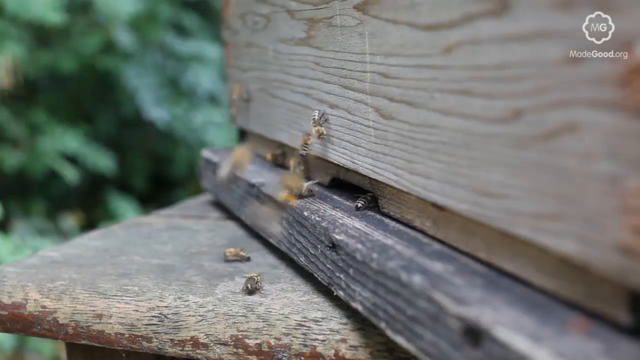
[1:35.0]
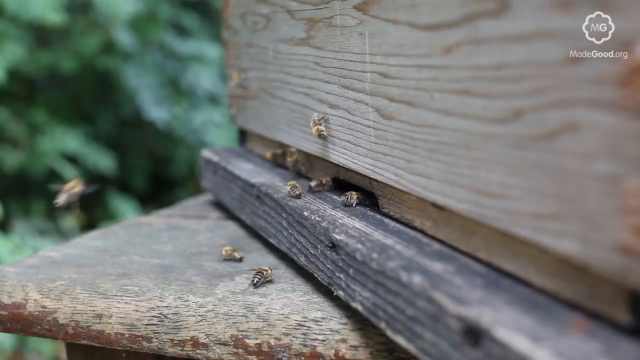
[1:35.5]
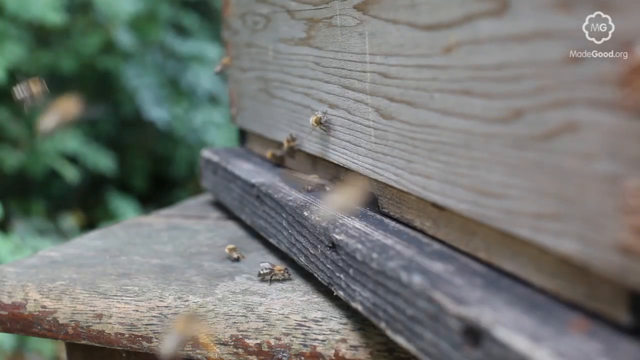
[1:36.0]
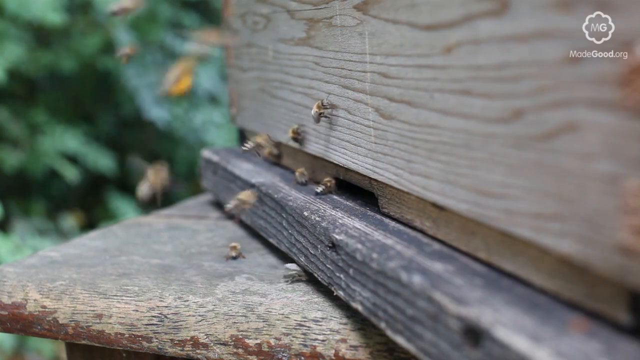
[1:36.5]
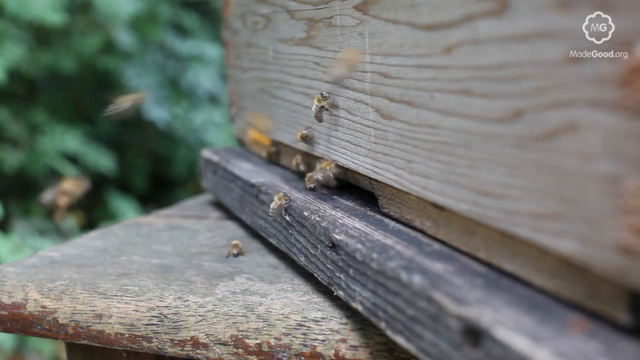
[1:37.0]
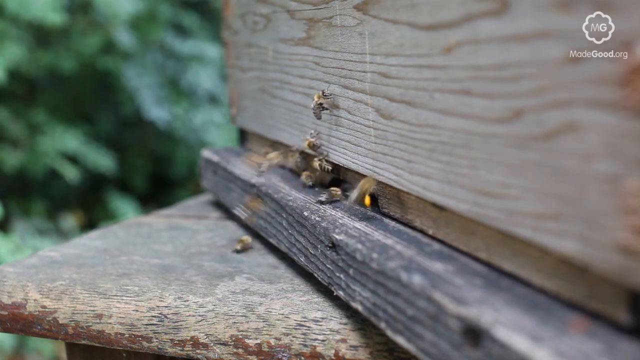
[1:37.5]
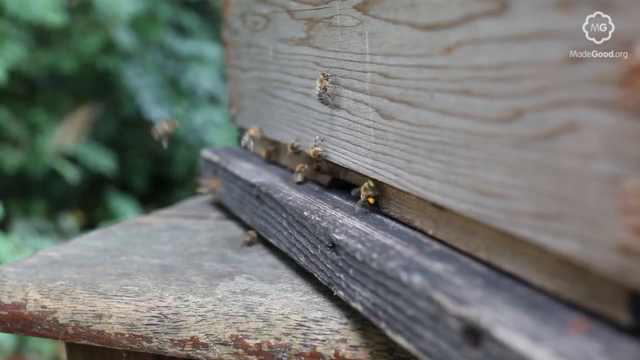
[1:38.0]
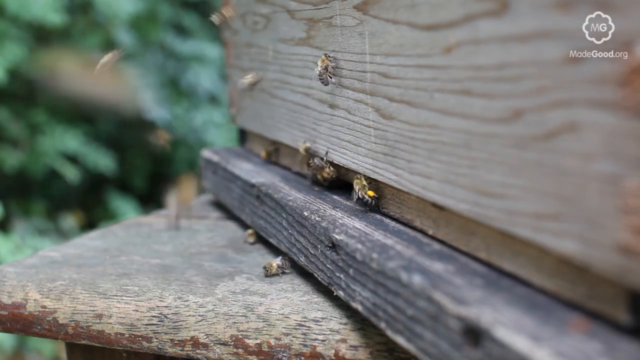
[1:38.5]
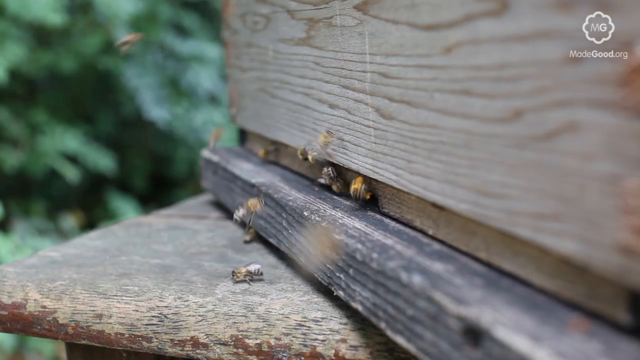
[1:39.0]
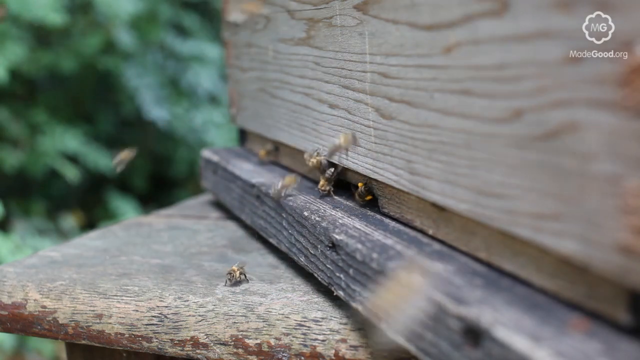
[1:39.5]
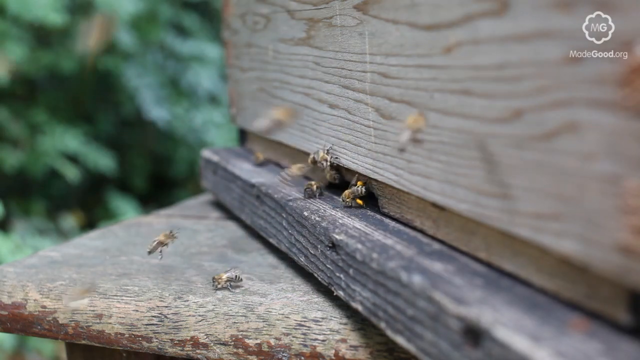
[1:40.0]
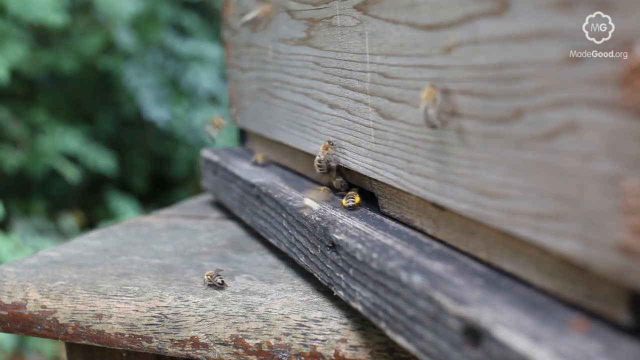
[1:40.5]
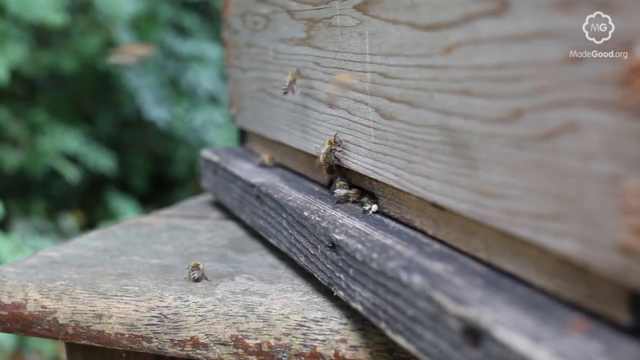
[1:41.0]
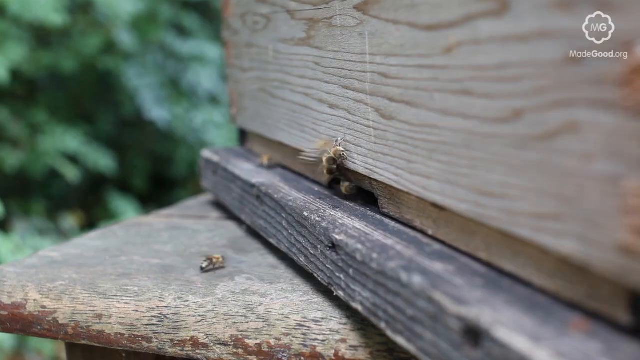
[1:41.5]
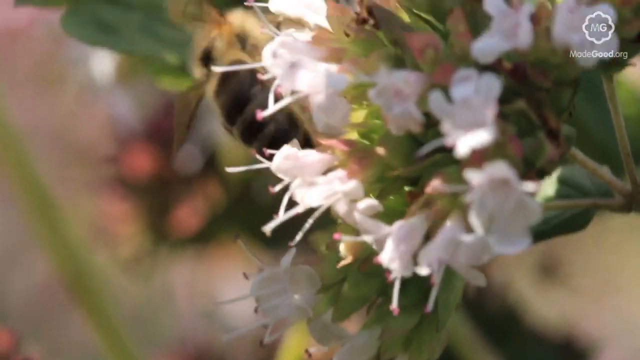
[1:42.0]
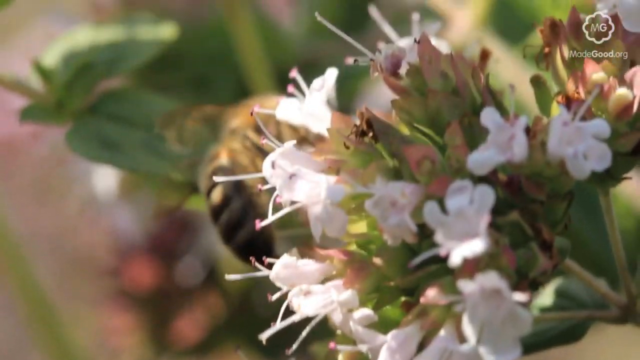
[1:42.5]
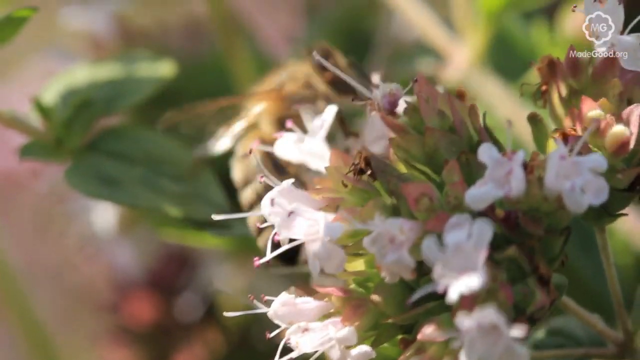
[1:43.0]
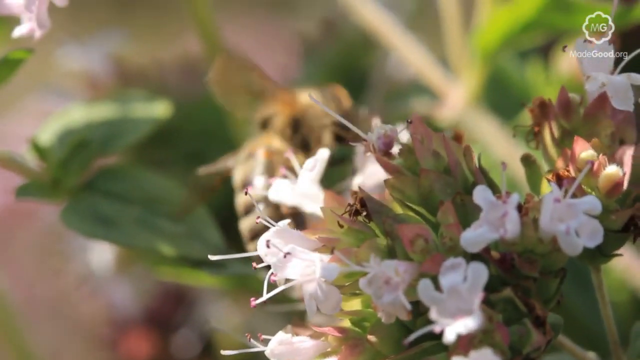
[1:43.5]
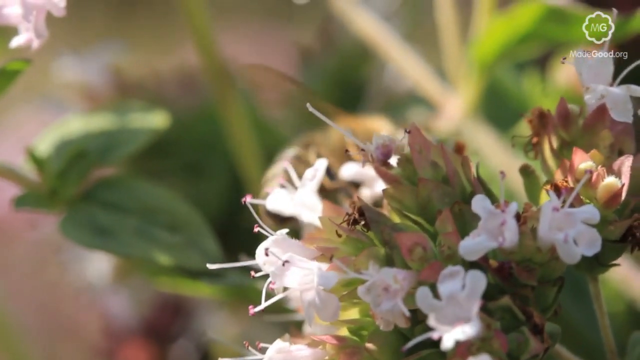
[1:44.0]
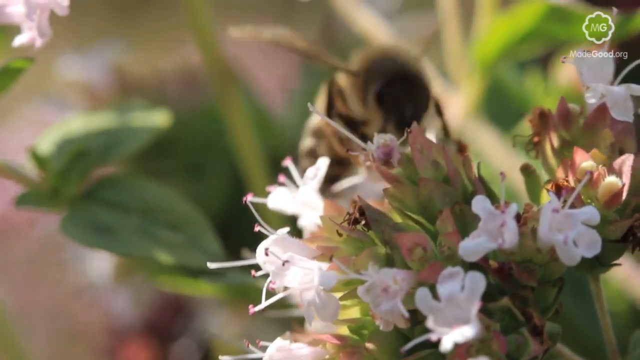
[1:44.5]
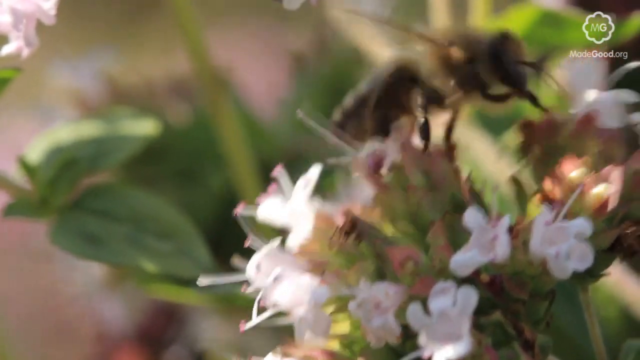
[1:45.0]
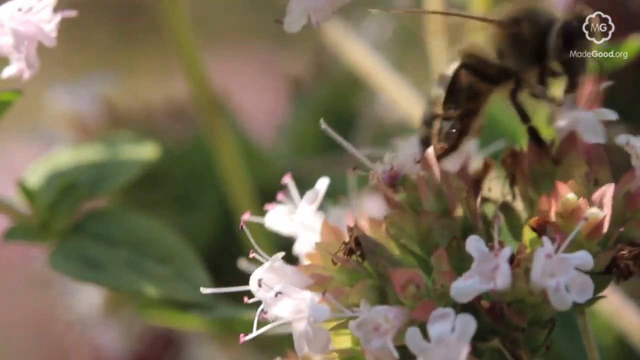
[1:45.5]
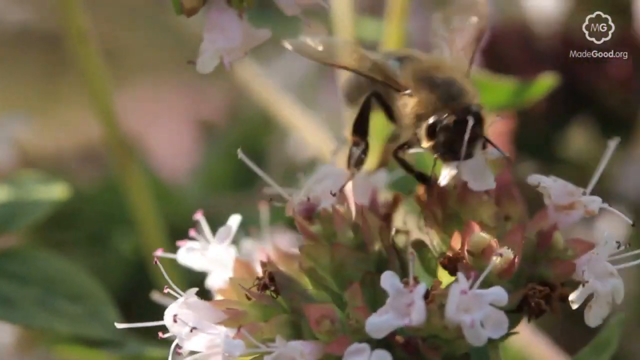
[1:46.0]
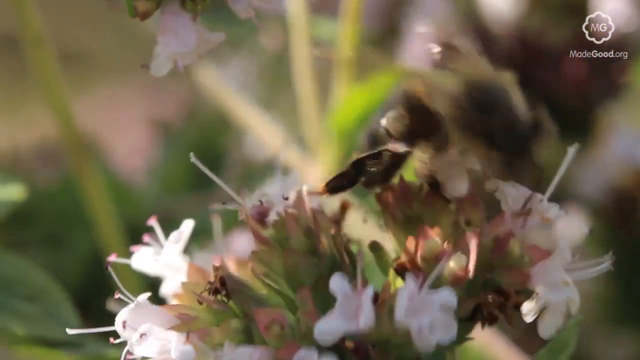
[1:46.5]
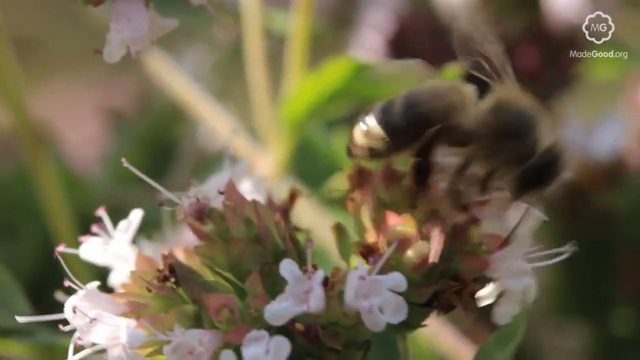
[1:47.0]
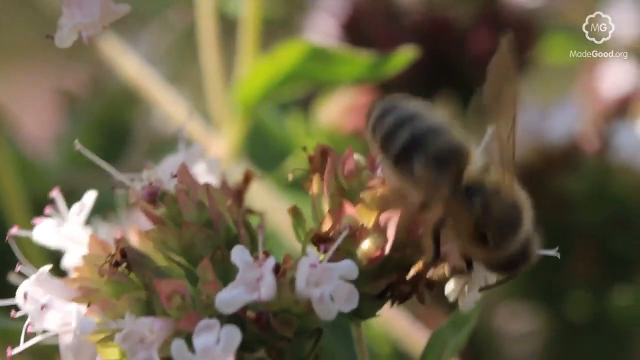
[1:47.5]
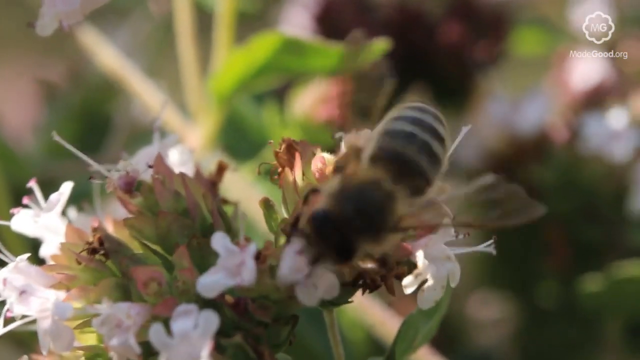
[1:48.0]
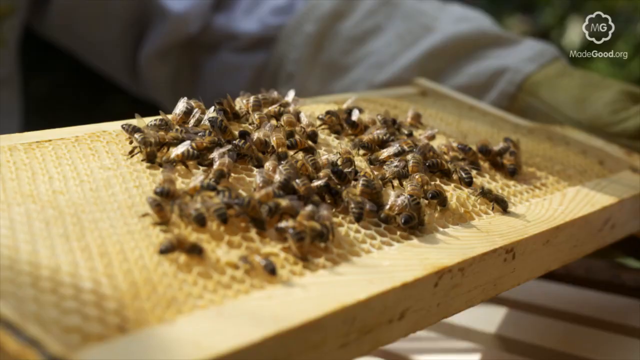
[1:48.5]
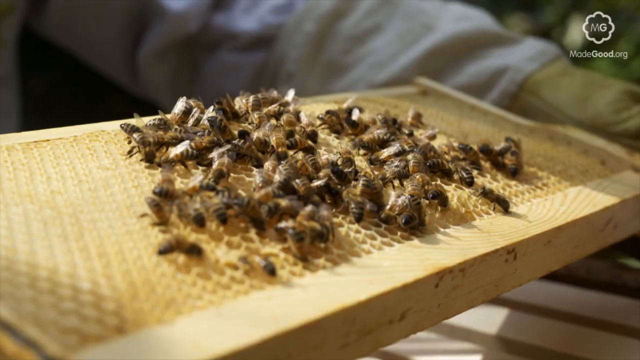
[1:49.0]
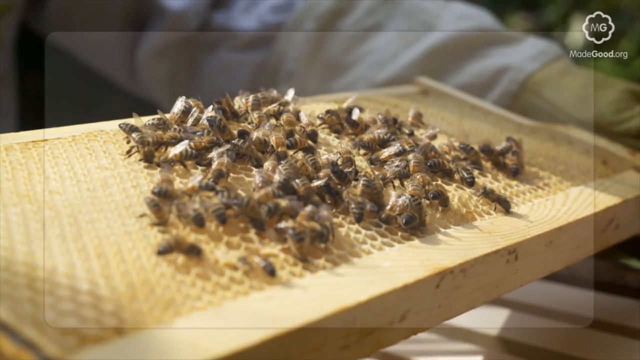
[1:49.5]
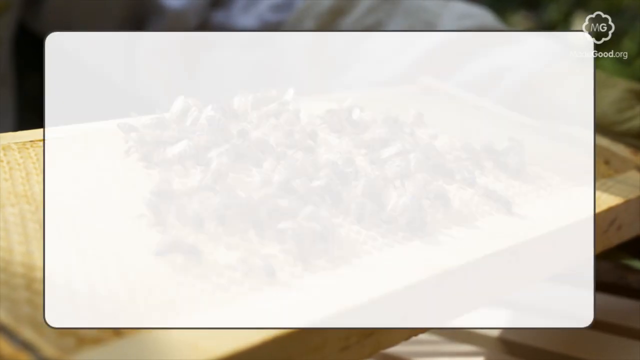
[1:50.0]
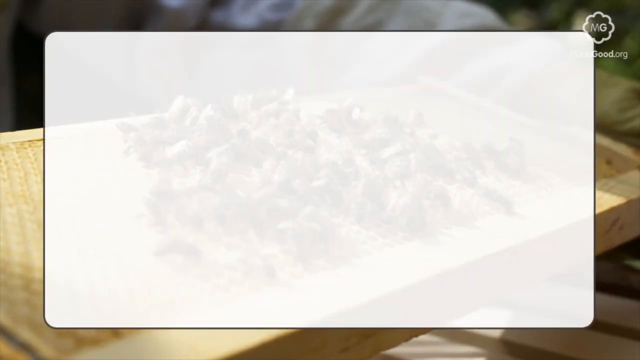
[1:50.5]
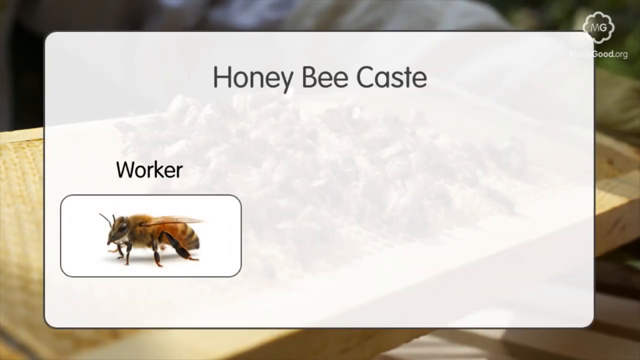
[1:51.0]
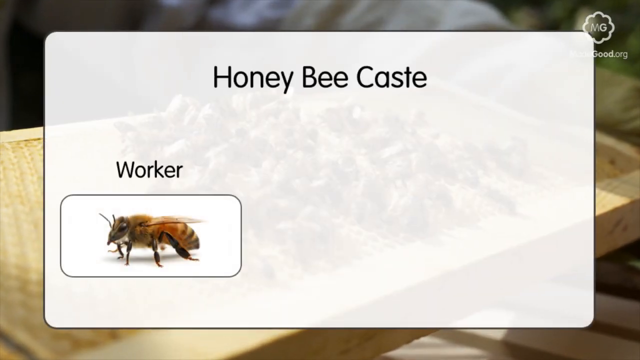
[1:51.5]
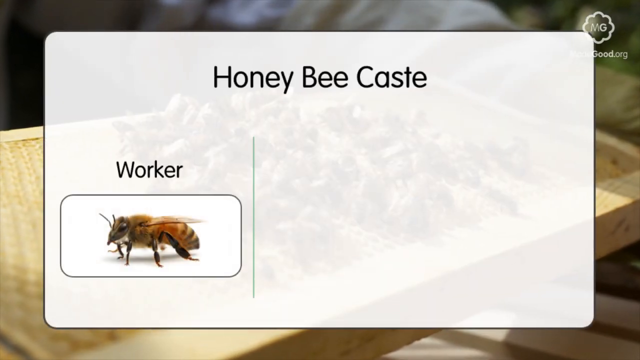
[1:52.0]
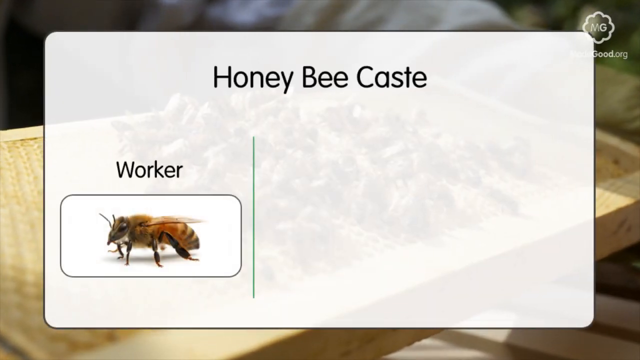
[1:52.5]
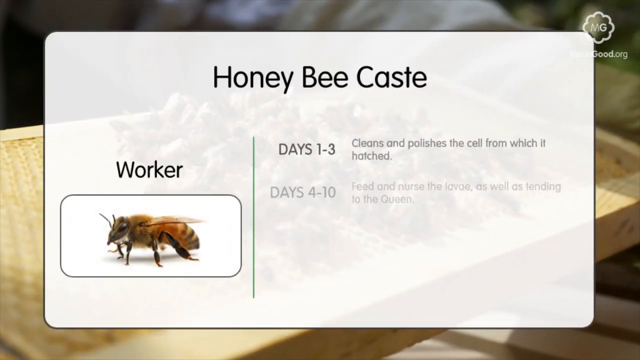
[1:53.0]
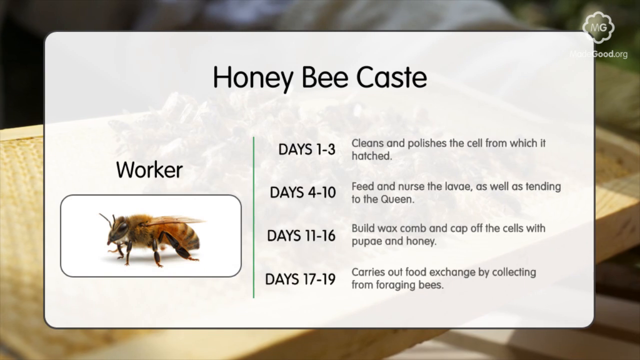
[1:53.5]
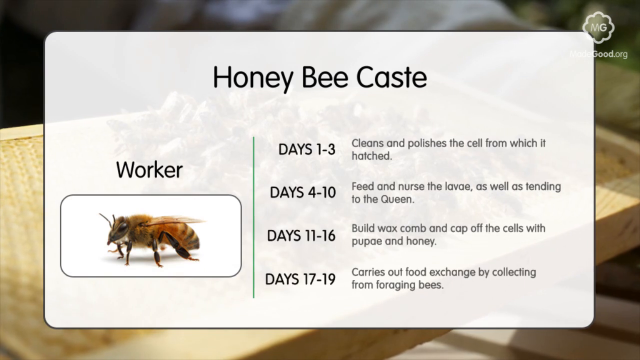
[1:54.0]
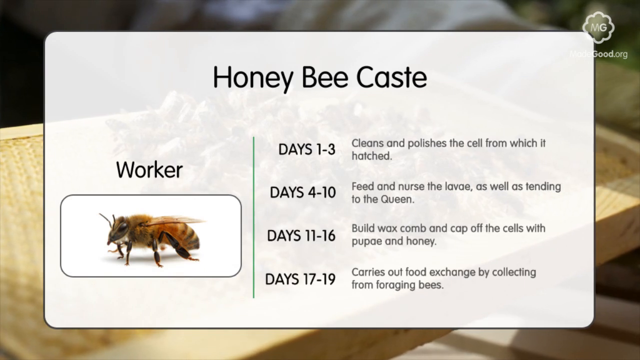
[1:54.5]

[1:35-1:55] Bees land on the wood and fly in and out of a small hole that appears to be a nest, with probably about five bees swarming right around it. The video then cuts to what looks like a bee crawling on a plant with white petals, potentially pollinating; it is a fairly large bee with a yellow and black back. It then changes to a graphic reading "honeybee cast" and "worker", showing the worker with a large yellow and black body and a timeline: "days one through three, cleans and polishes the cell from which it hatched", "days four through 10, feed and nurse the larvae, as well as tending to the queen", "days 11 to 16, build wax and cap off the cells with pupae and honey", and "days 17 through 19", carrying out food exchange by collecting from foraging bees.